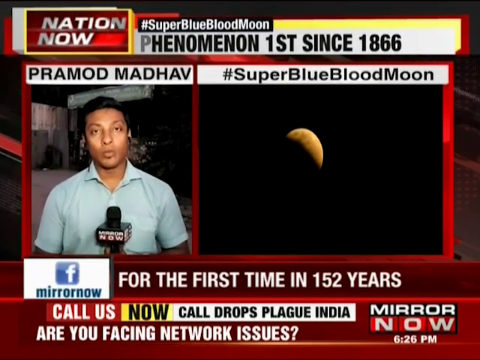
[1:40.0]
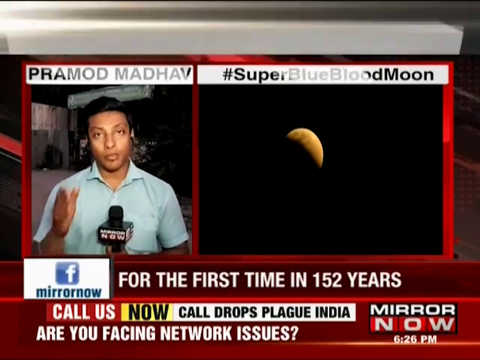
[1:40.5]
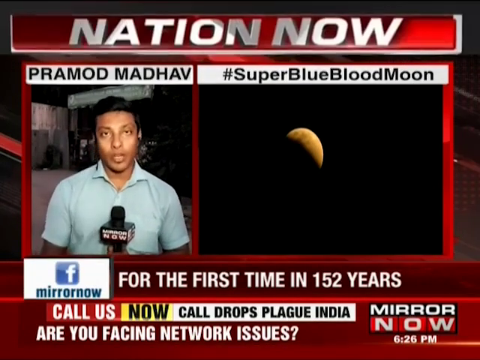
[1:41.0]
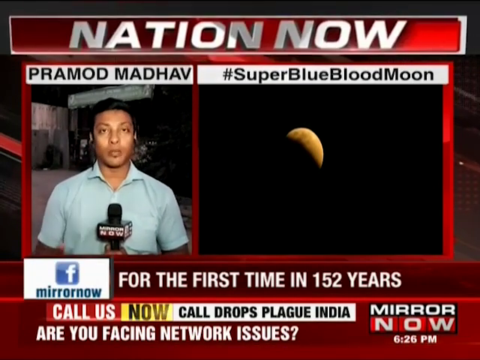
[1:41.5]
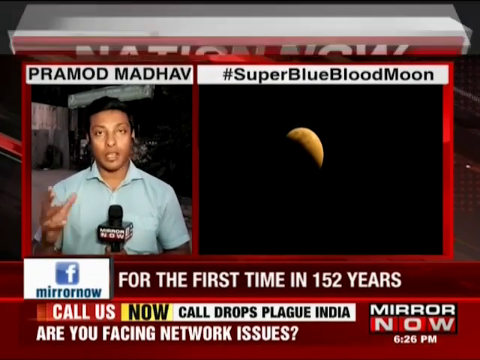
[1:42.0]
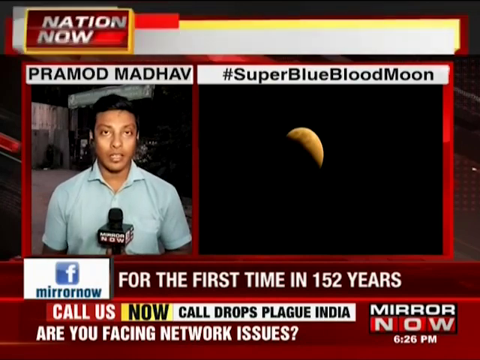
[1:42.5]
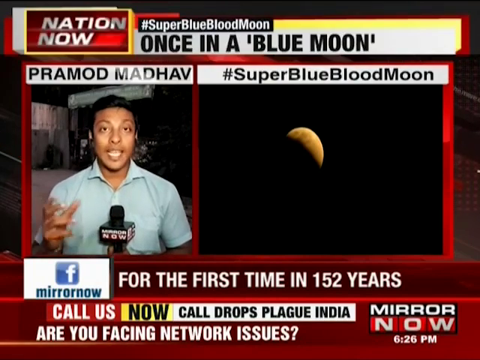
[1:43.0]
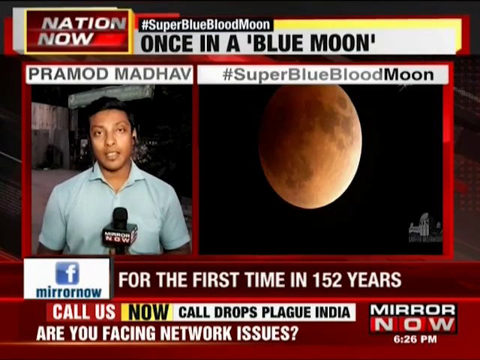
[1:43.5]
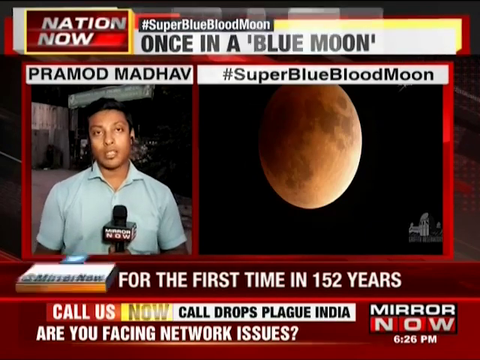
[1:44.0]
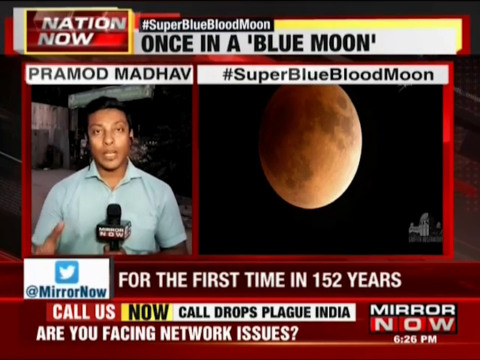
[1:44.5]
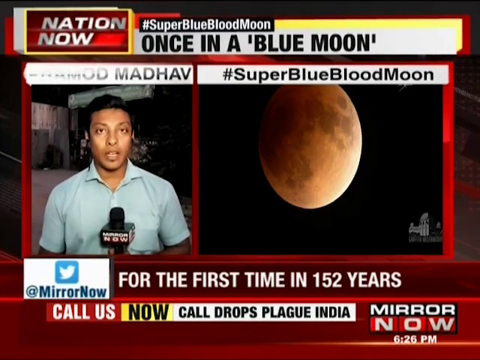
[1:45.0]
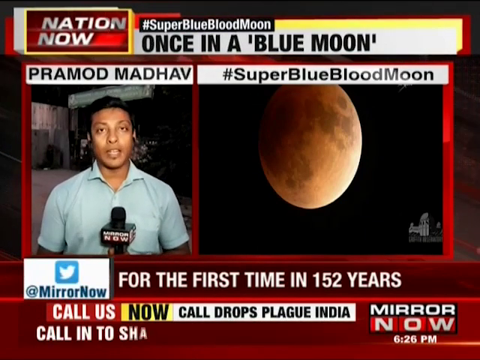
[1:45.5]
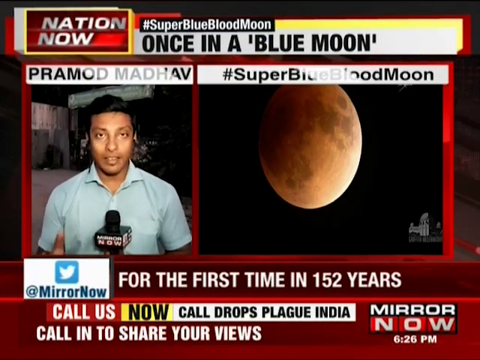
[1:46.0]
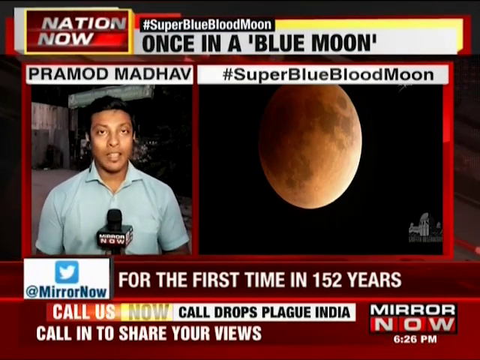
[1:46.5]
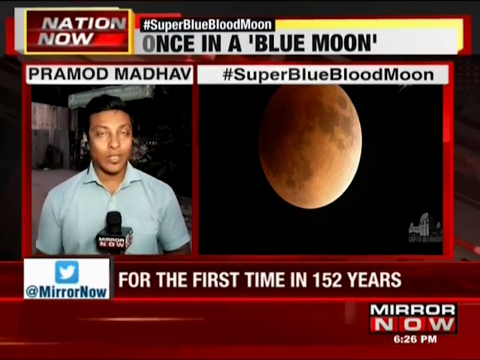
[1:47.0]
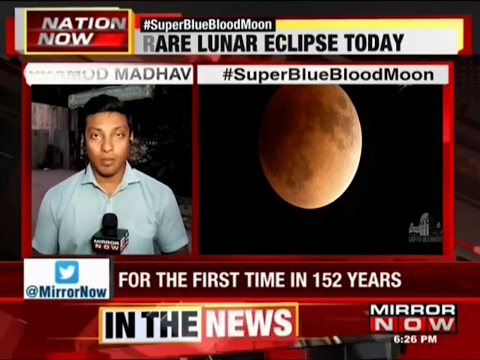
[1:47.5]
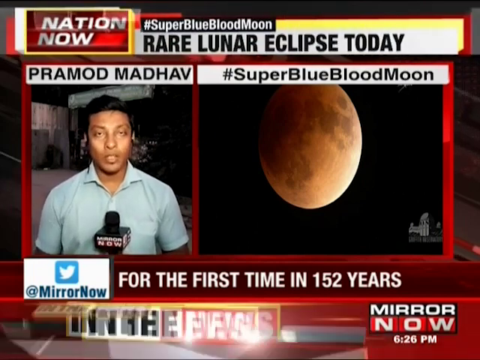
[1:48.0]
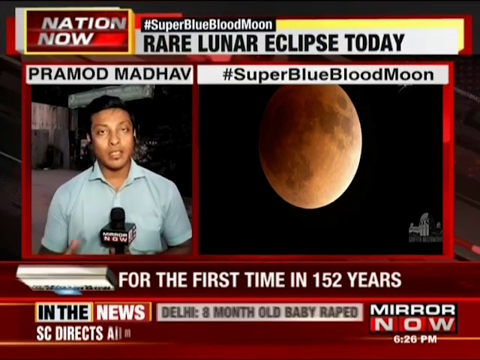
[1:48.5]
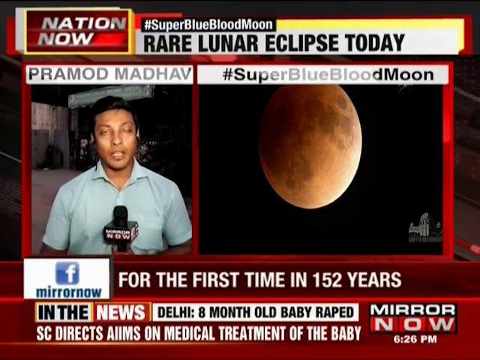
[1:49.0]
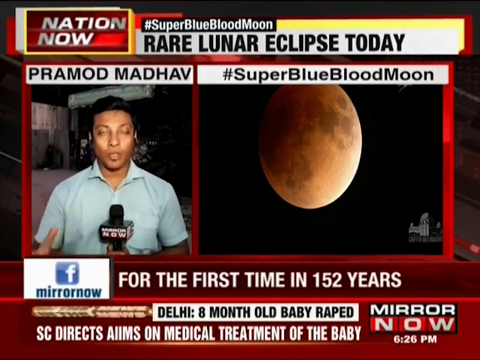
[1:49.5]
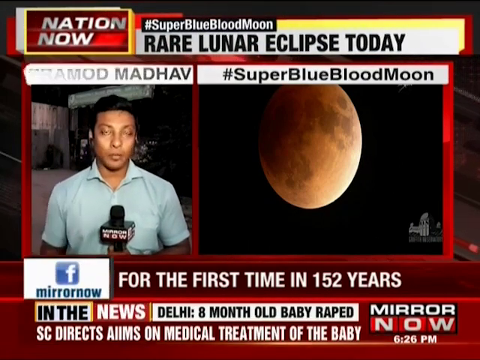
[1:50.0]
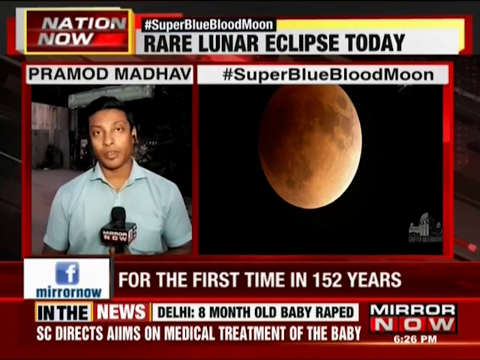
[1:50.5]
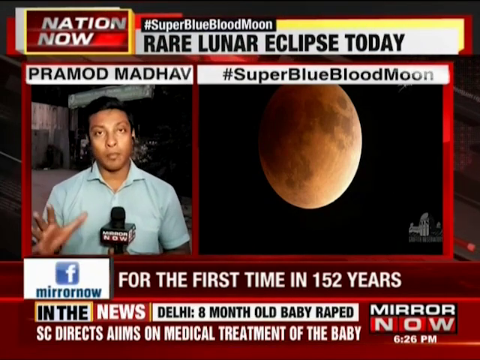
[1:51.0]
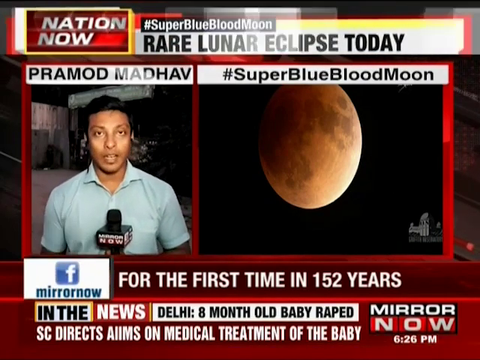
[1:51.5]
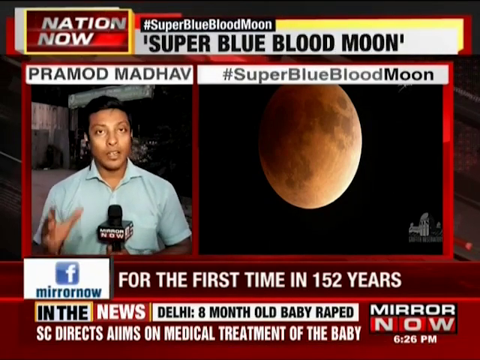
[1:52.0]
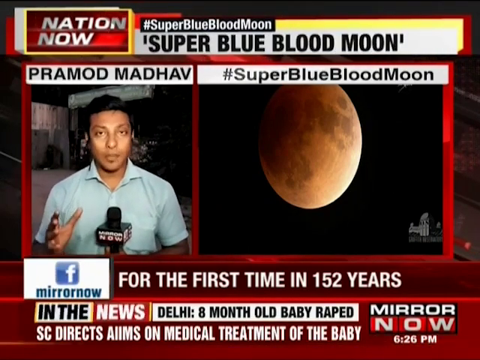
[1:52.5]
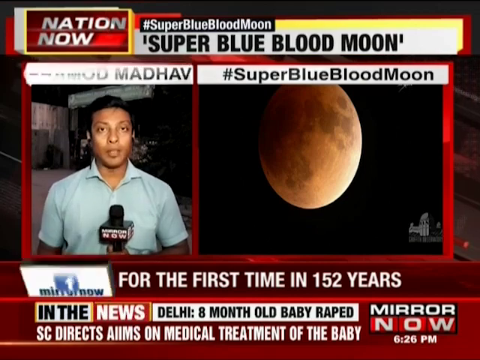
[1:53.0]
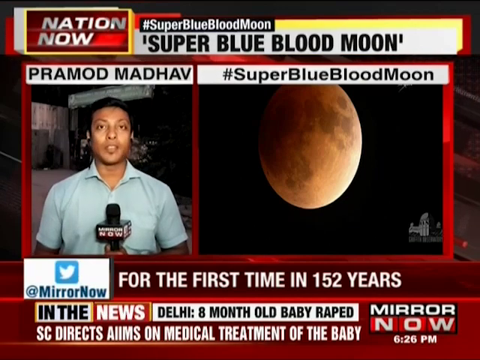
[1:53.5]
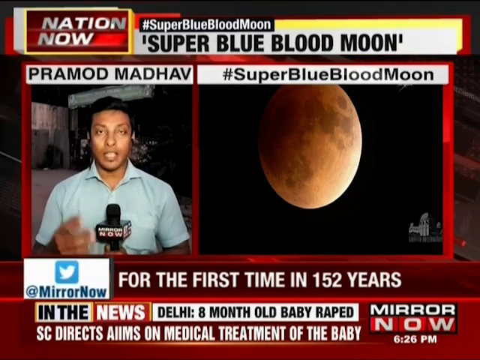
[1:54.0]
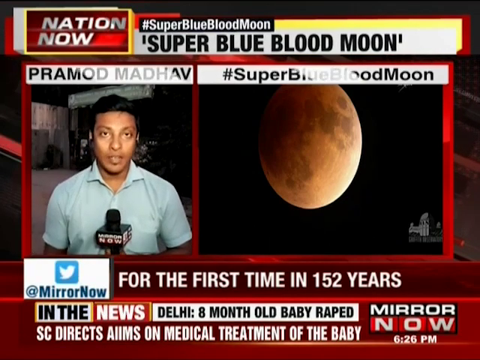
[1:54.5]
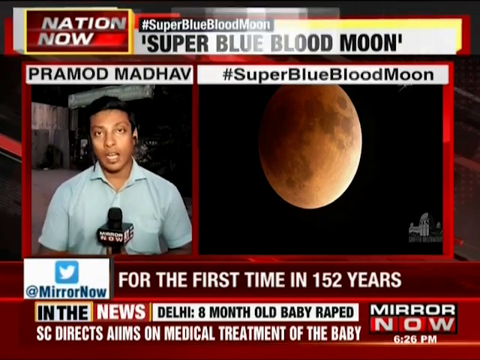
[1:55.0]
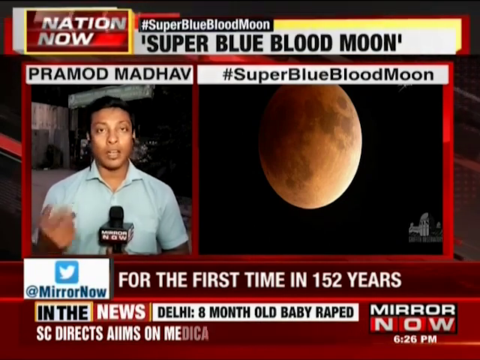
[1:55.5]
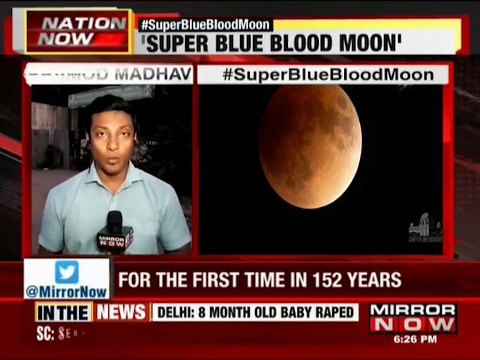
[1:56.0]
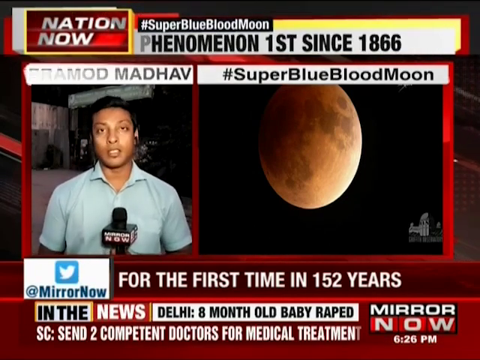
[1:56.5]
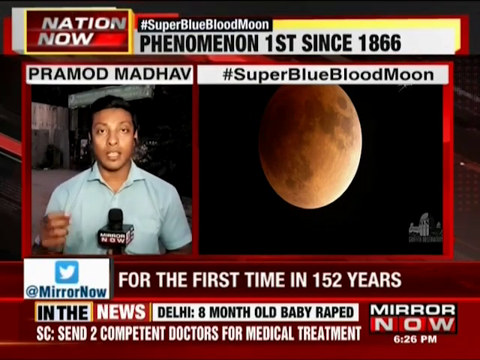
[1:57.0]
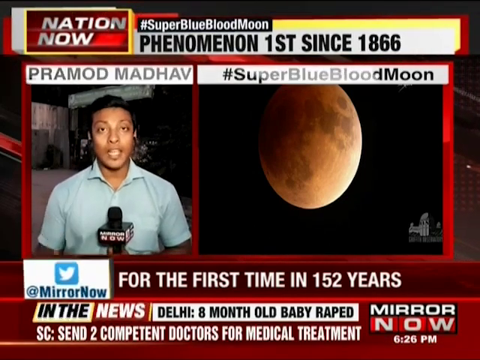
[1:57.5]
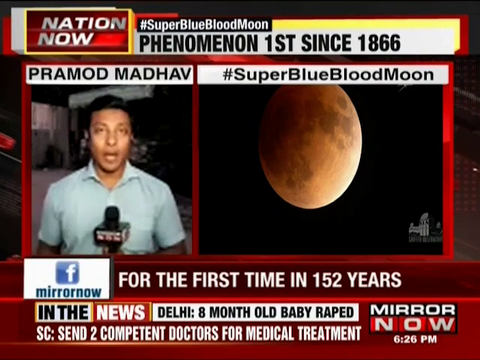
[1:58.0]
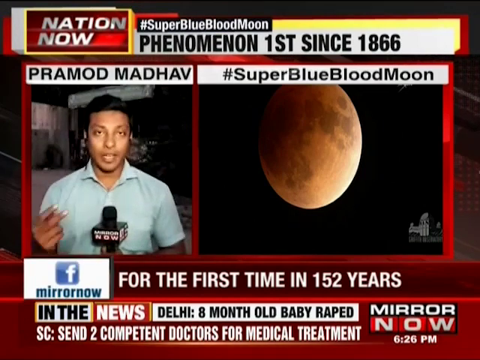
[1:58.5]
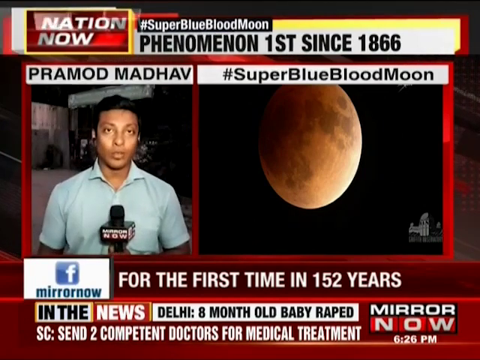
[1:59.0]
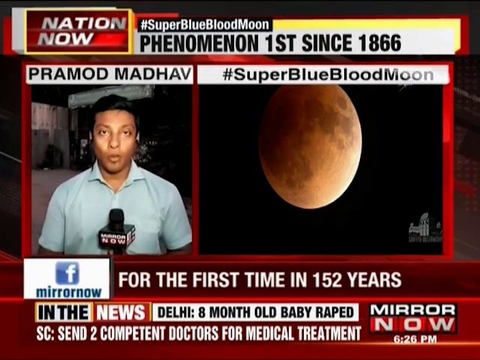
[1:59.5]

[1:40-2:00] A person is live and showing the moon. The coverage refers to the first time in 152 years, a phenomenon first seen since 1866, and the super blue blood moon. The moon seems to be a little bit red.